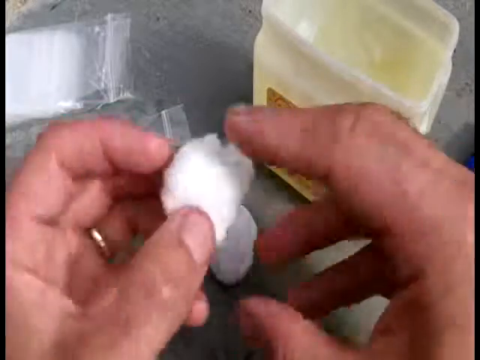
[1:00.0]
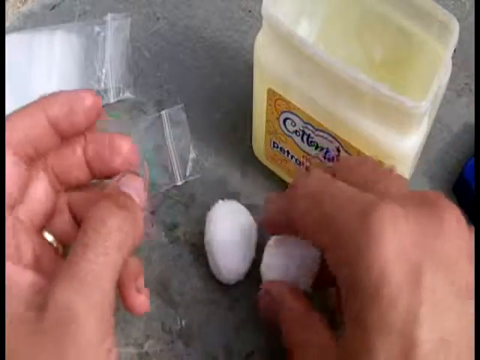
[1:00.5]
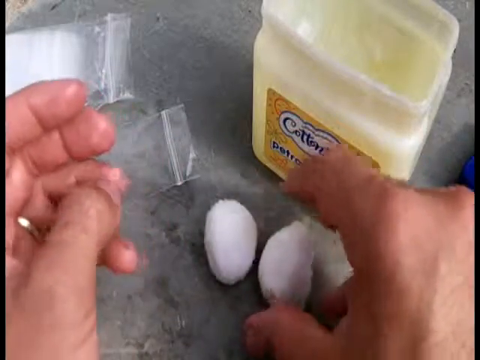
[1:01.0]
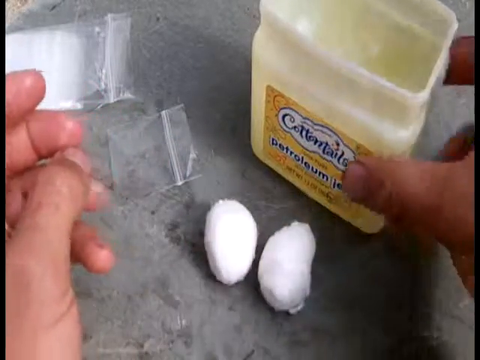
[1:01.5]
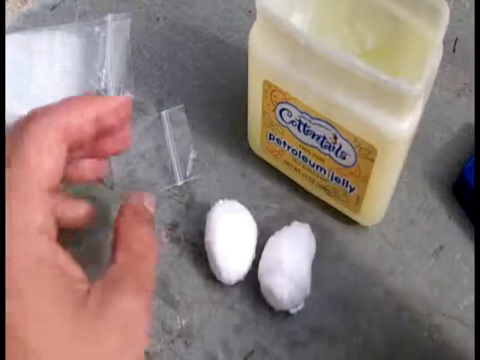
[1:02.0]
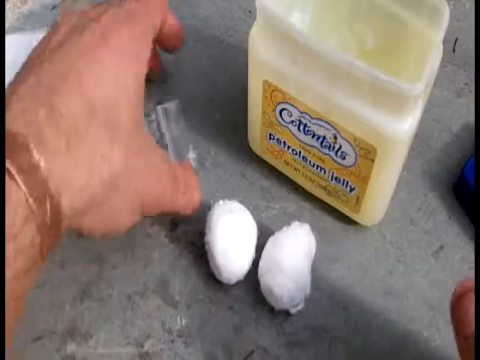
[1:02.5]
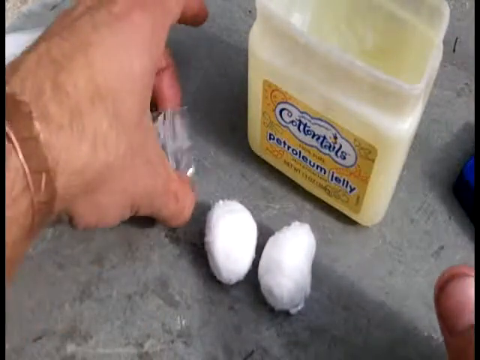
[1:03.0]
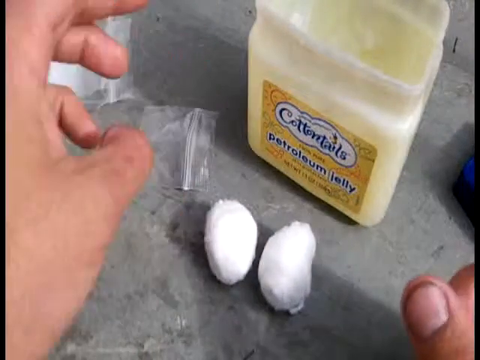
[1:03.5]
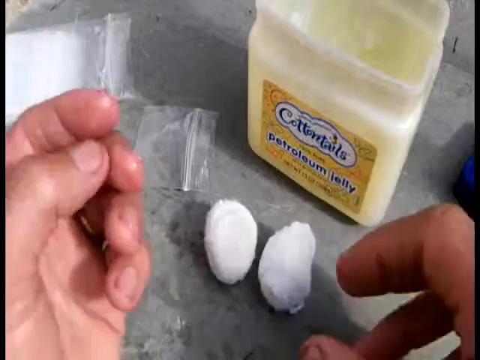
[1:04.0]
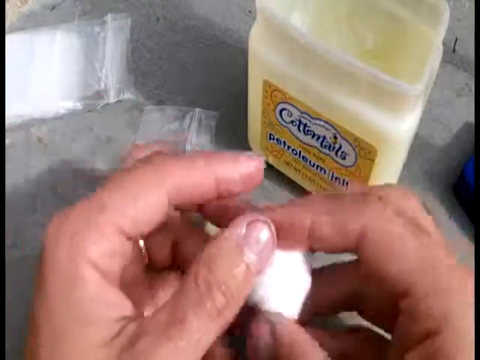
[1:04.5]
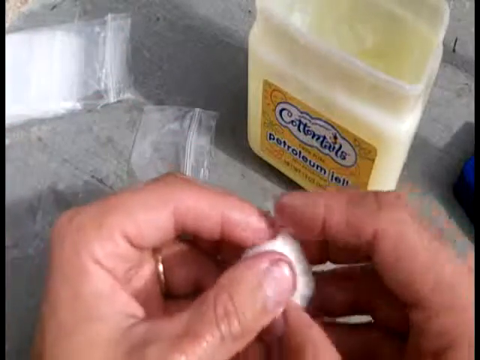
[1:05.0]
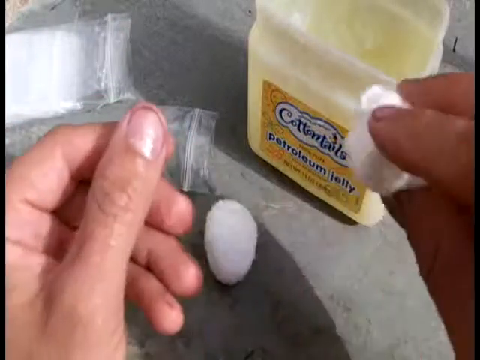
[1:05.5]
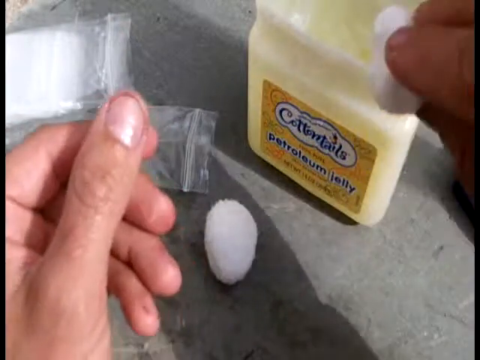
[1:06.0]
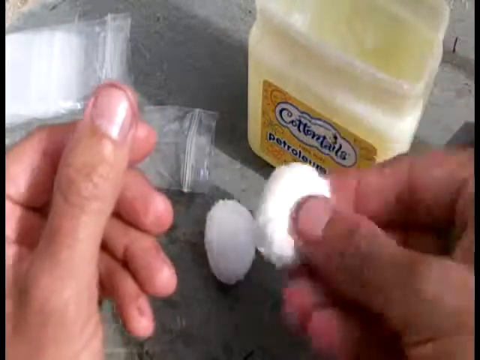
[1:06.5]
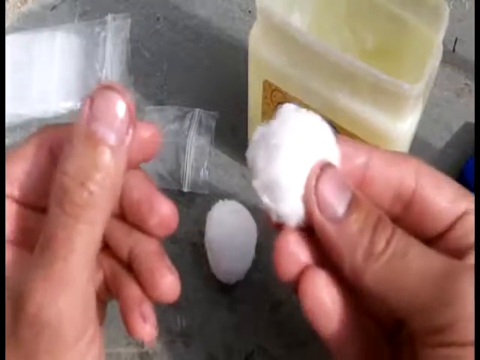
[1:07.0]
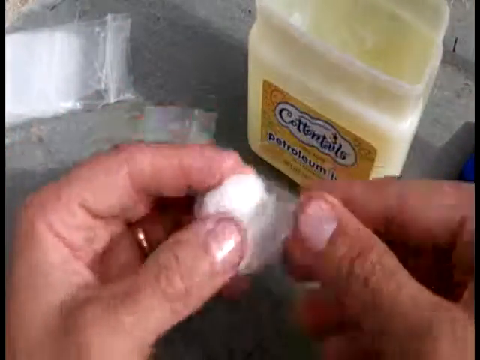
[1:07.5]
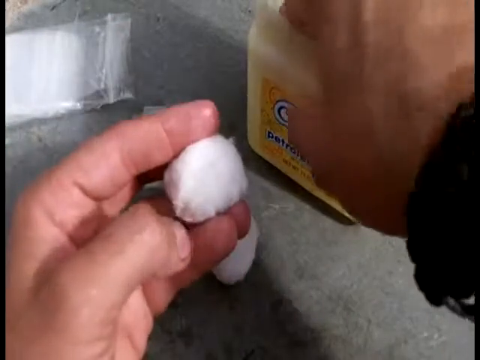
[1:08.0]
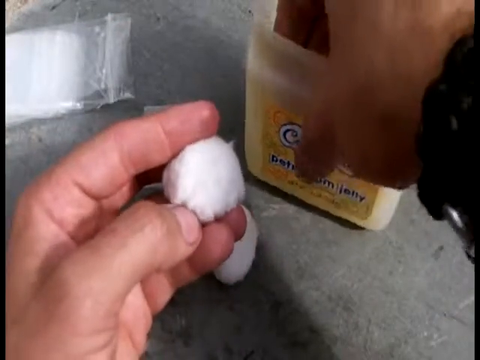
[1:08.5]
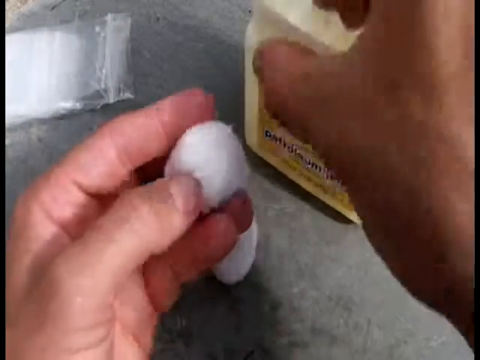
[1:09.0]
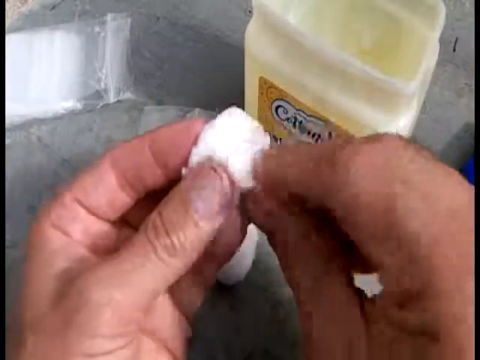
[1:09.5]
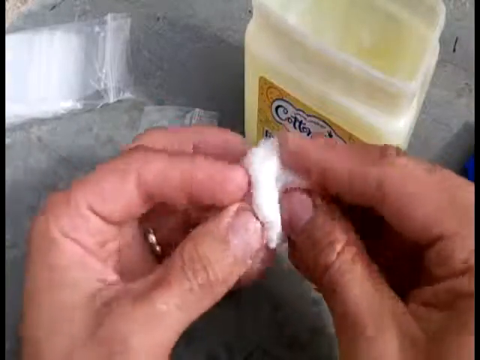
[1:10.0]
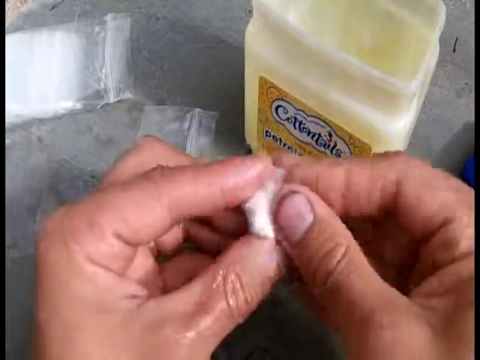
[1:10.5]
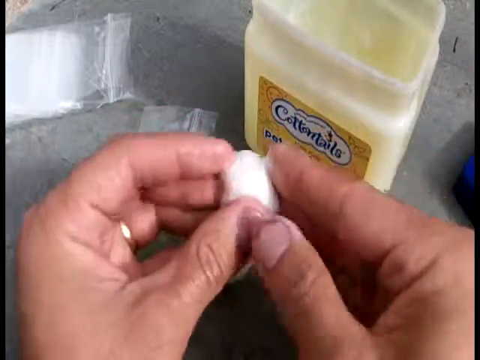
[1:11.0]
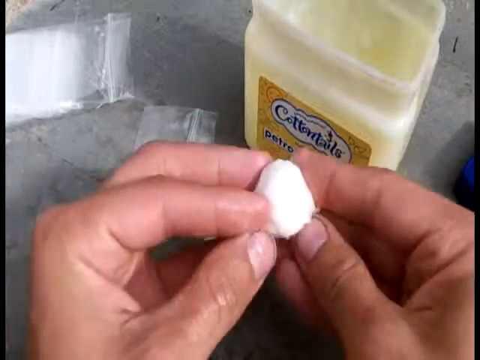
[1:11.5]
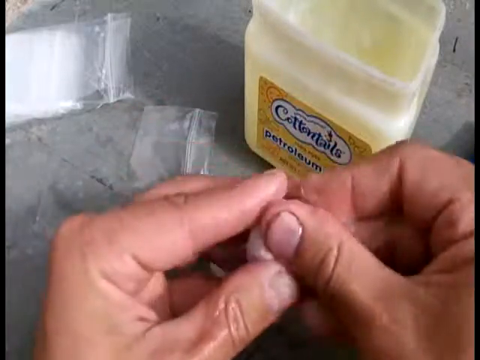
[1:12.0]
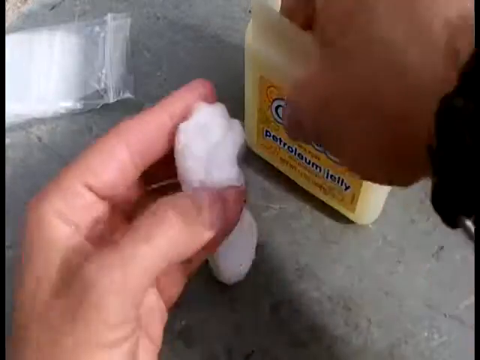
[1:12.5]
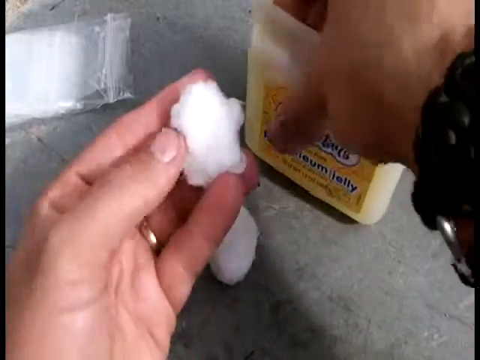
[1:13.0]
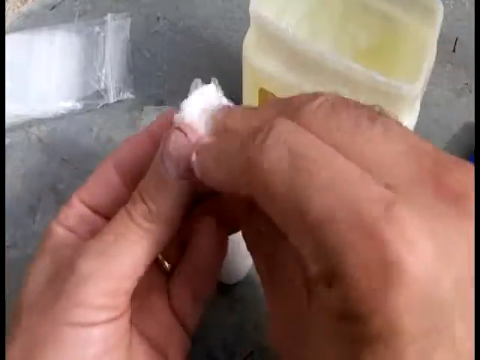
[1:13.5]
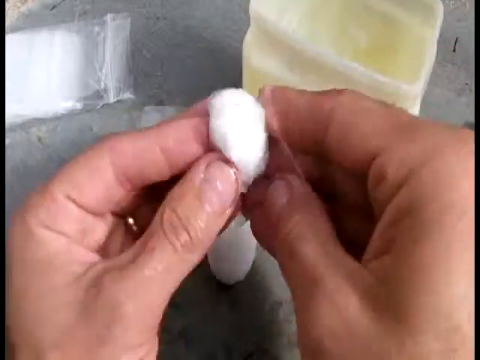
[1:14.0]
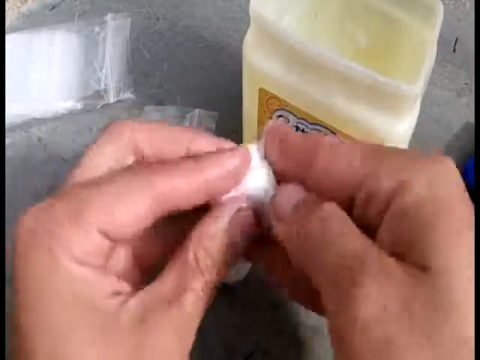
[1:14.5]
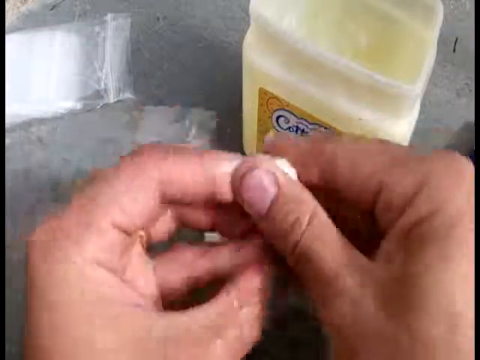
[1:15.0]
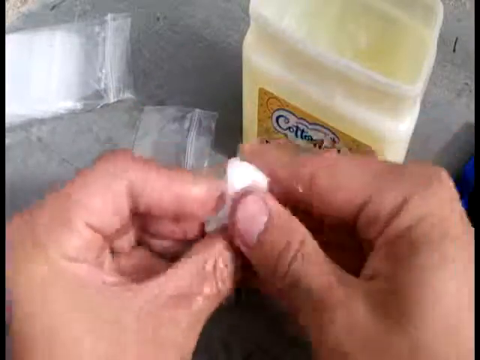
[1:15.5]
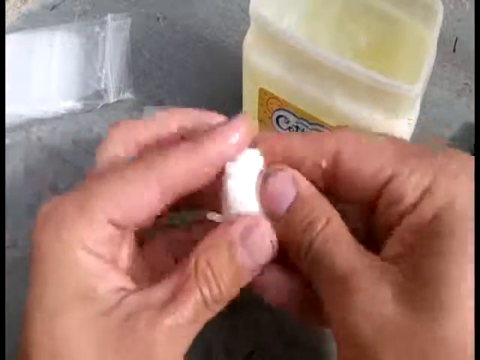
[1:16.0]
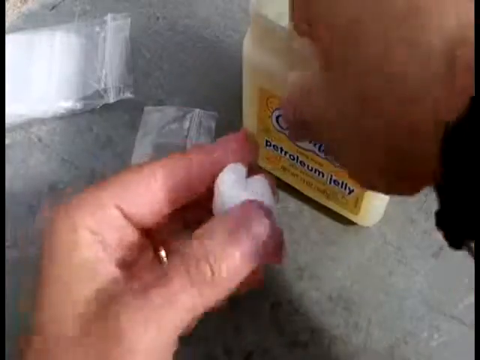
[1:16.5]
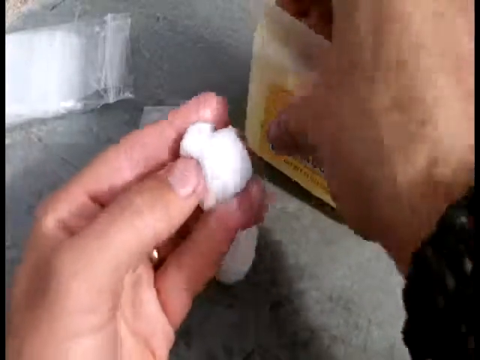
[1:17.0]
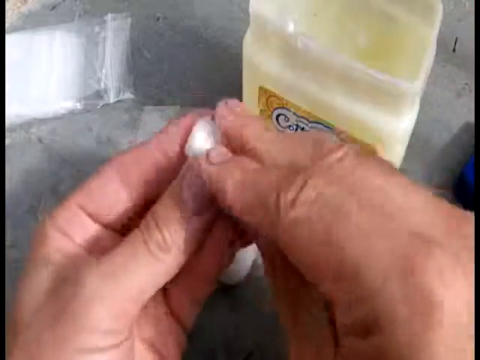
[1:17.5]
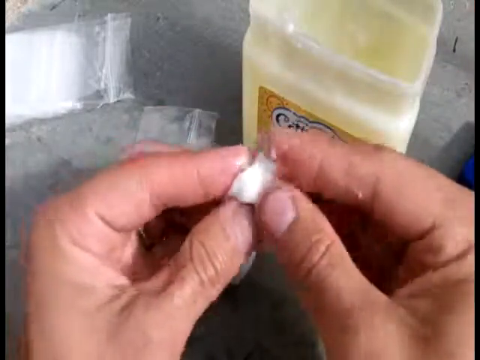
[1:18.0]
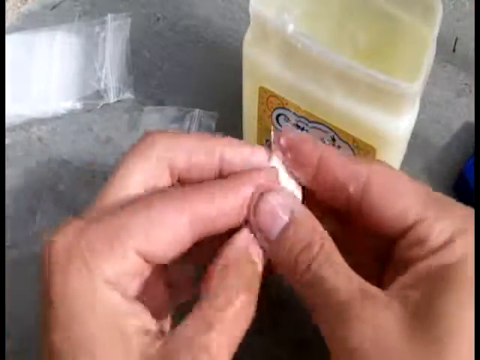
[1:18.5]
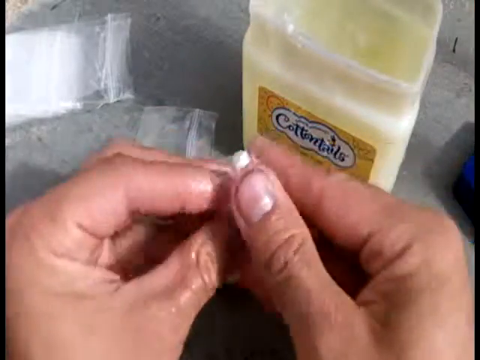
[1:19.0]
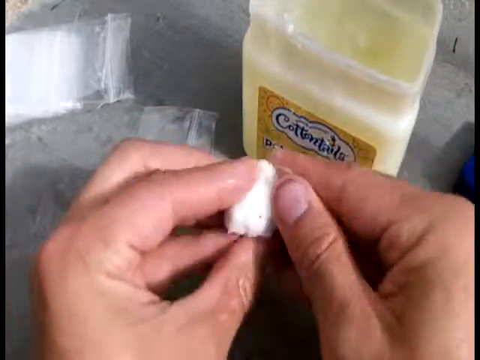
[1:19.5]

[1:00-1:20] A pair of hands holds a small white cotton ball in close-up, then sets it down on the grey tabletop, where there is another cotton ball, a jar of light yellow Cottontail petroleum jelly, a small one-inch Ziploc bag, and a larger, tall, narrow Ziploc bag with many other bags inside. The hands sort of push the petroleum jelly back a bit and then move the small Ziploc bag back as well. They pick up one of the small white cotton balls, hold it in one hand, and make a scooping-like motion with it in the air. They dip the index and middle fingers into the jar of petroleum jelly and wipe it onto the surface of the cotton ball, rotating the ball so it is coated everywhere. They dip the fingers back into the jar and rub more onto the cotton ball while rotating it, then dip into the jar once more and coat the cotton ball with even more petroleum jelly.